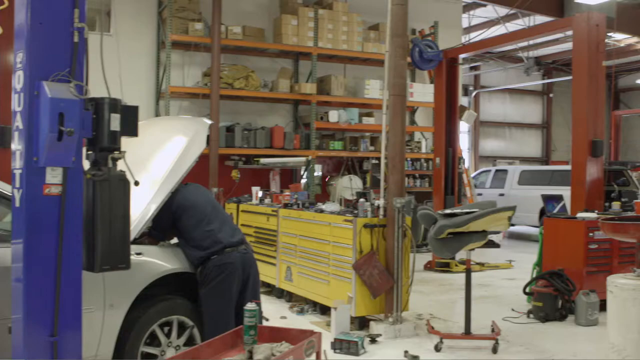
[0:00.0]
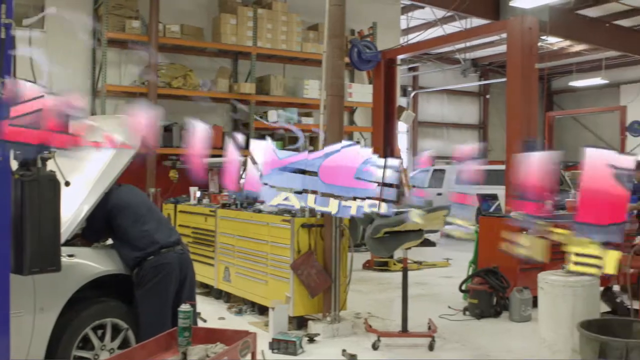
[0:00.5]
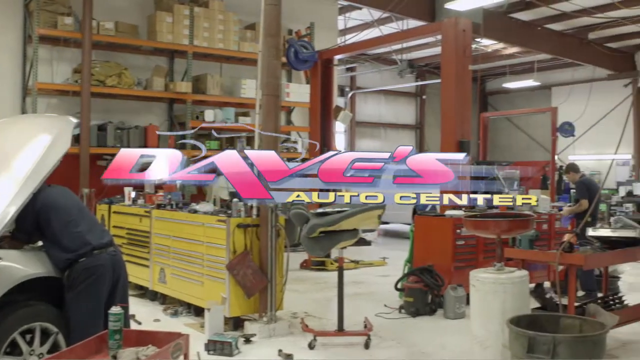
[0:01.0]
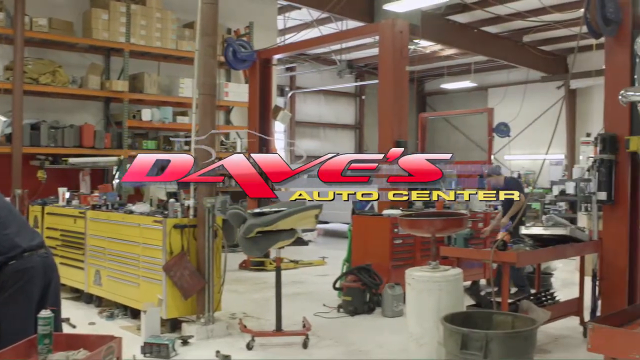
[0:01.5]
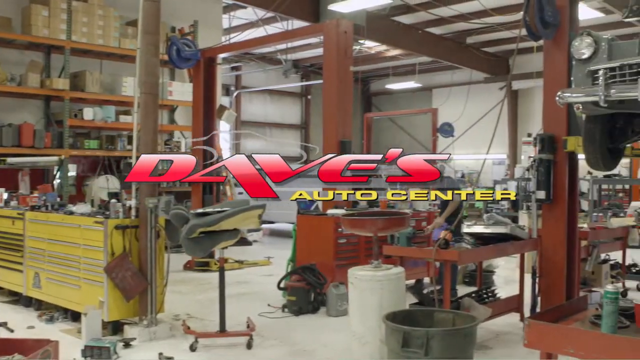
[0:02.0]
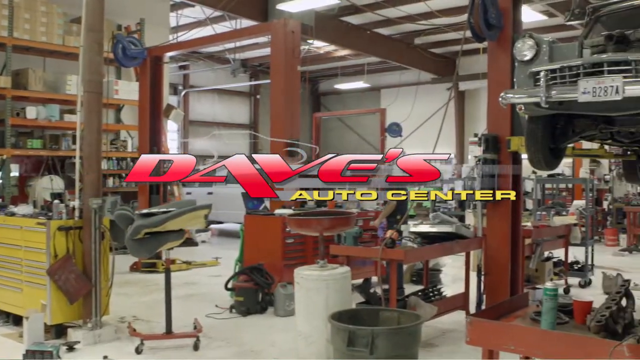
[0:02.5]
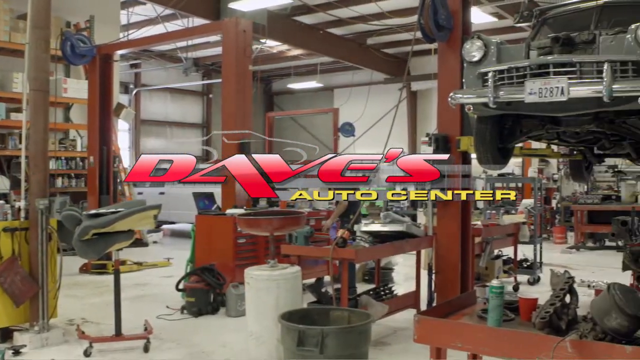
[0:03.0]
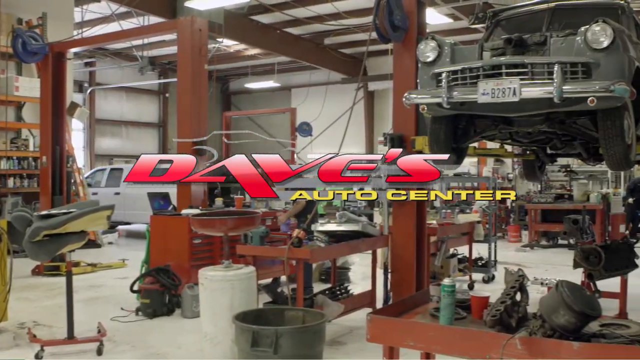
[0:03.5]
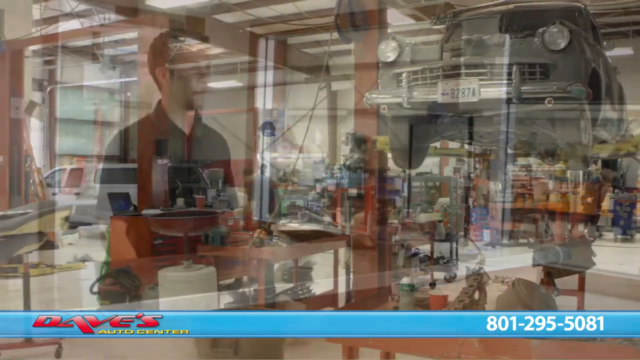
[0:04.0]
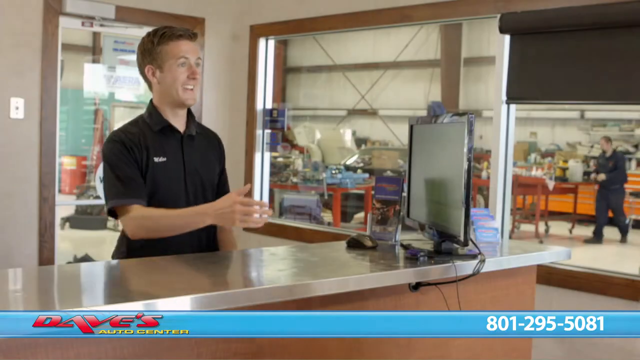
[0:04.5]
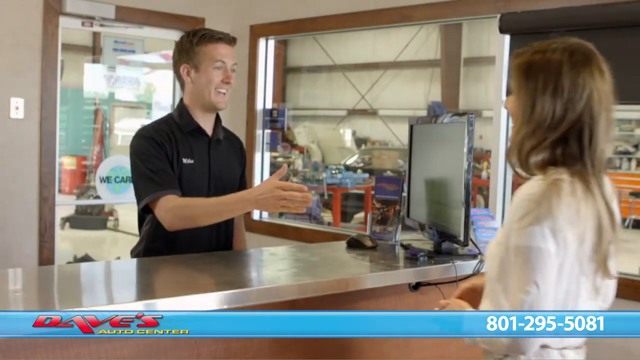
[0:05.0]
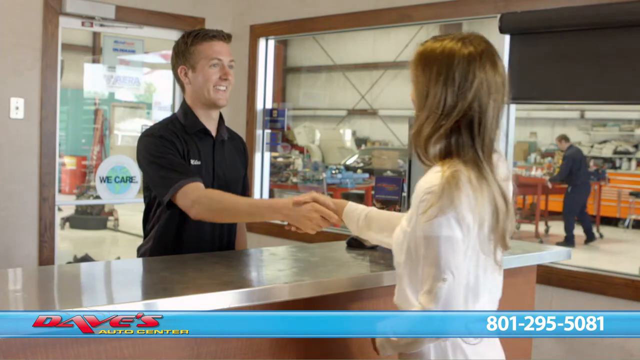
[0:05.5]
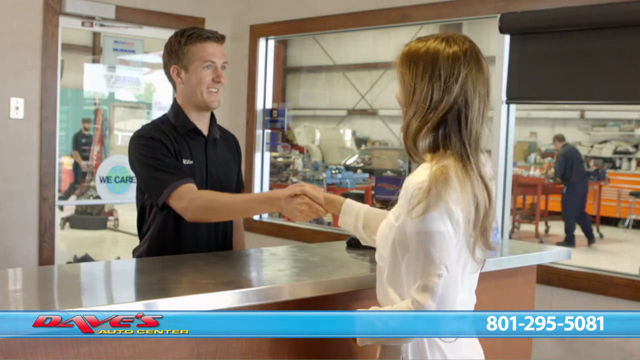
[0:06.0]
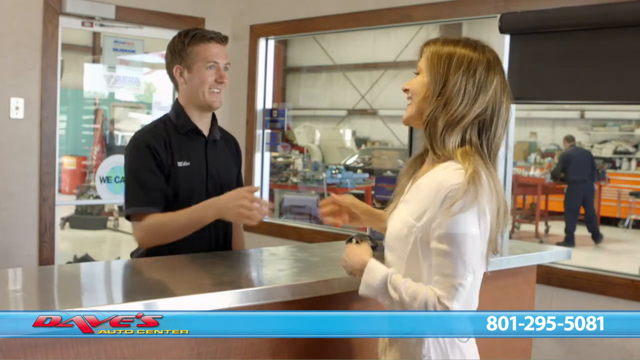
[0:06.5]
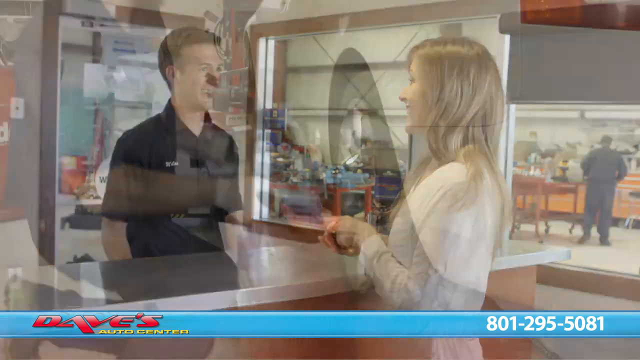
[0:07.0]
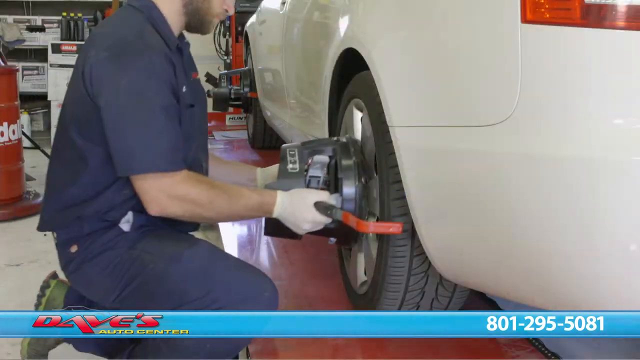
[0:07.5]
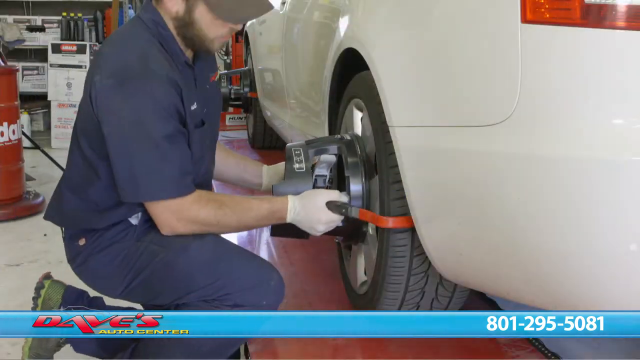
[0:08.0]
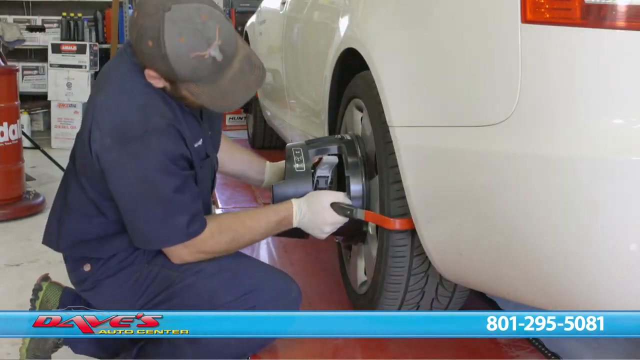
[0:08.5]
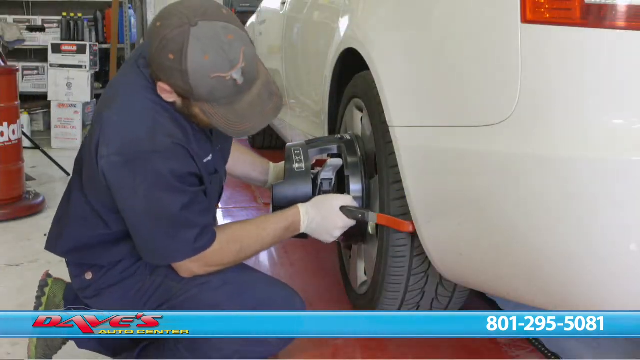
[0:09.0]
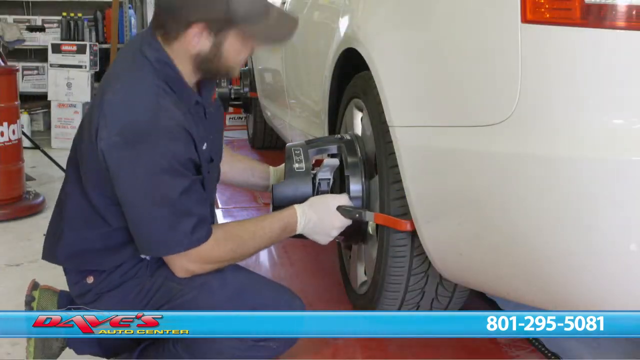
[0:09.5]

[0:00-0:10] The scene appears to be inside an auto shop, with a white car on the left side that has its hood up and a man leaning over the hood. The camera pans toward the right as text appears on the screen reading "Dave's Auto Center," first out of focus and then coming into focus. The camera keeps panning right until a car on a lift several feet up in the air comes into view. The video then switches to the front desk, where a man in a black shirt holds out his hand as if he wants to shake hands with somebody. A woman in a white shirt comes in from the right side, reaches up, grabs his hand and shakes it. At first only the back of her head is visible; she has long hair that goes down past her shoulders. She turns her head slightly toward the left so her face can be seen, and she has a big smile on her face, as does the man. He puts his hands down and she puts her hands in front of her. The video then switches to a man in a blue suit and white gloves holding a gadget up to a rear tire on a vehicle. He braces the gadget to the tire; it has a red, finger-like part that grasps around the back of the tire.